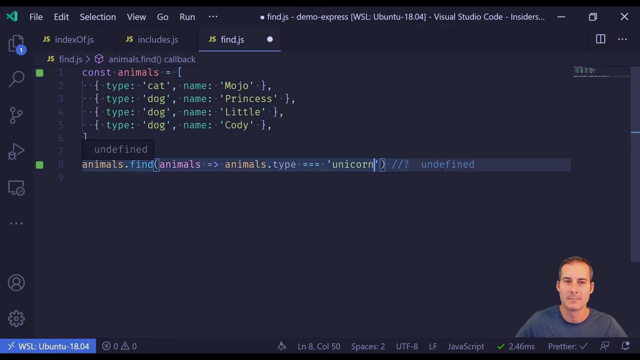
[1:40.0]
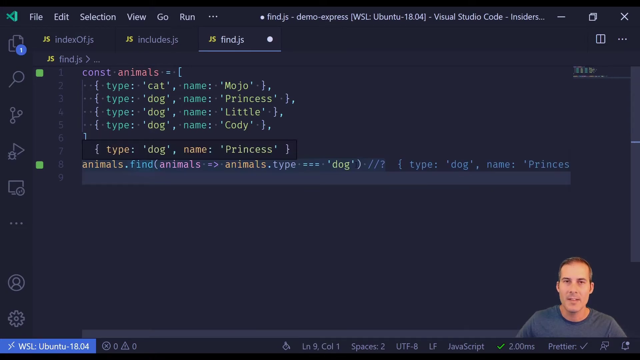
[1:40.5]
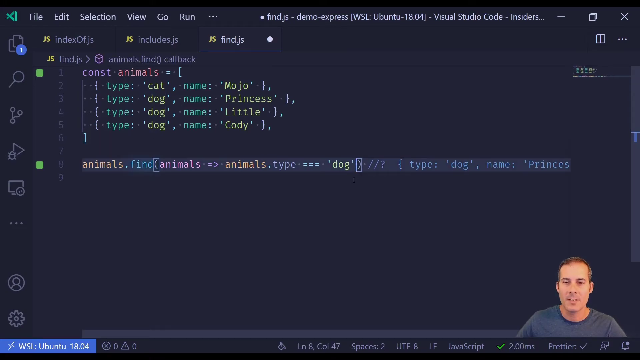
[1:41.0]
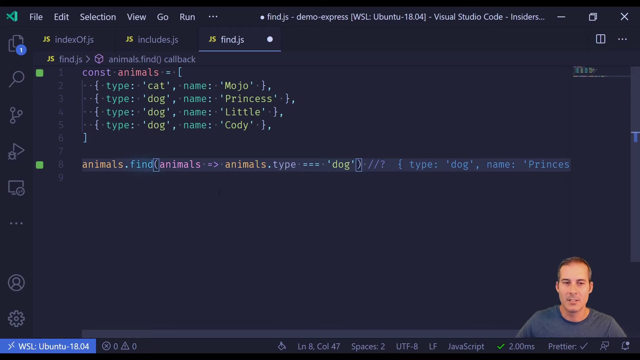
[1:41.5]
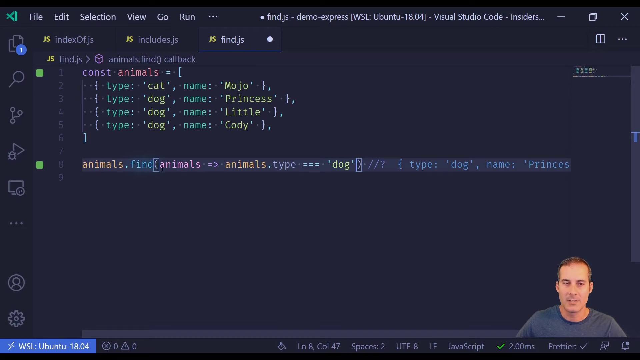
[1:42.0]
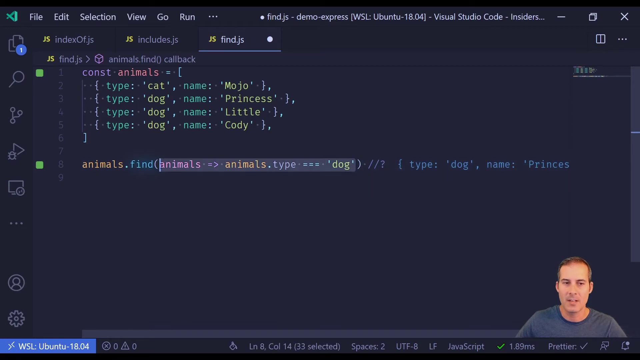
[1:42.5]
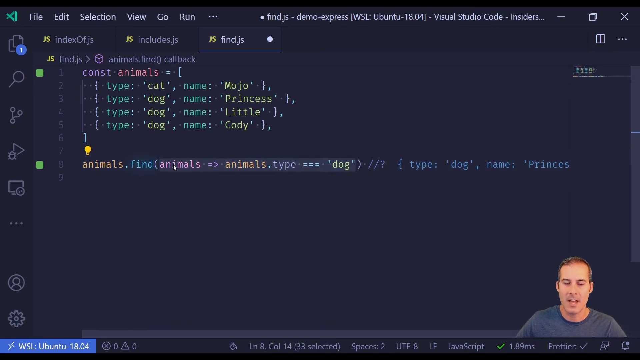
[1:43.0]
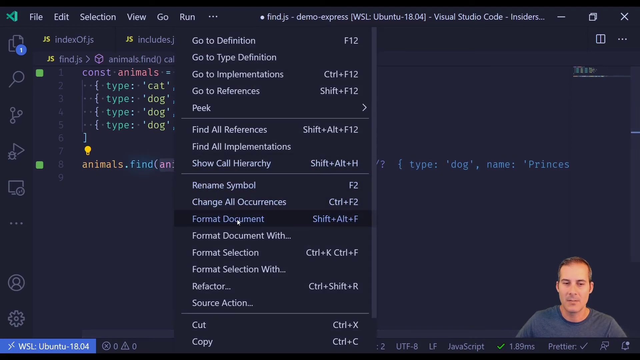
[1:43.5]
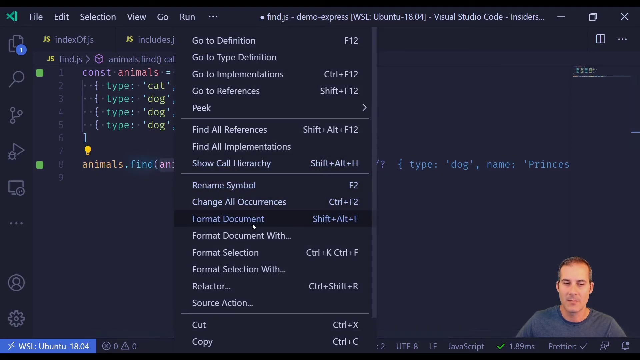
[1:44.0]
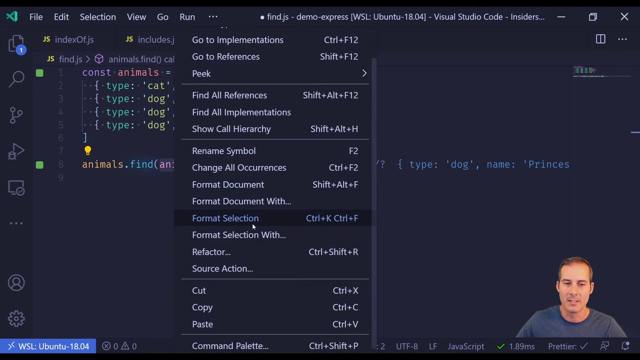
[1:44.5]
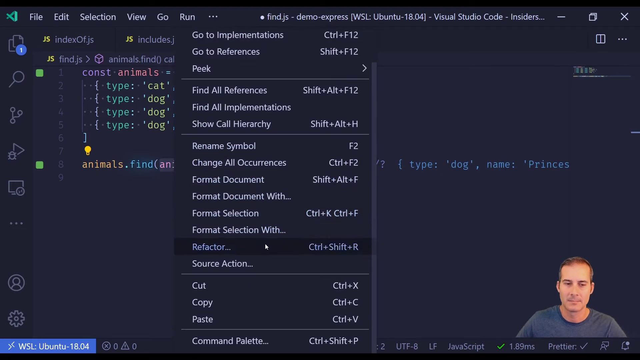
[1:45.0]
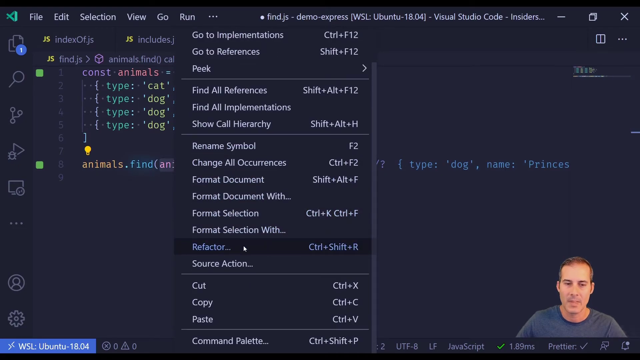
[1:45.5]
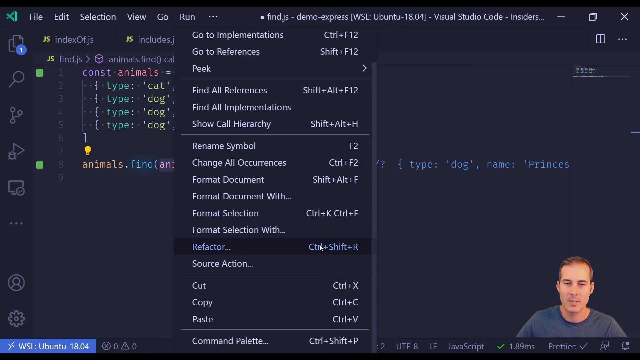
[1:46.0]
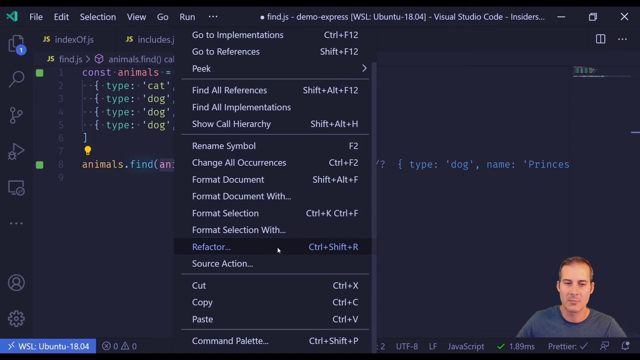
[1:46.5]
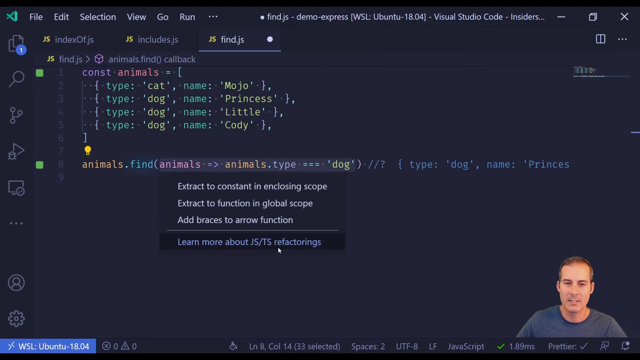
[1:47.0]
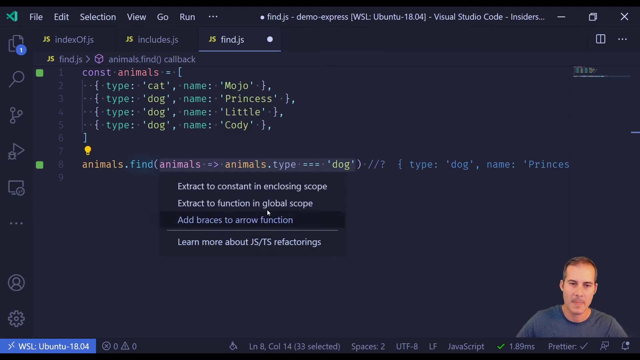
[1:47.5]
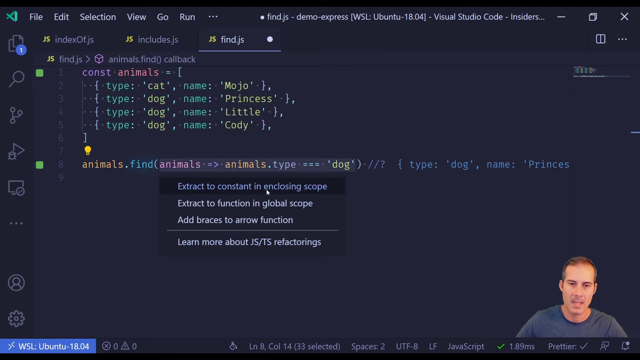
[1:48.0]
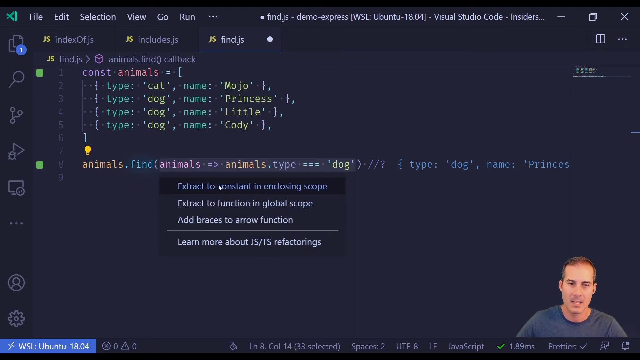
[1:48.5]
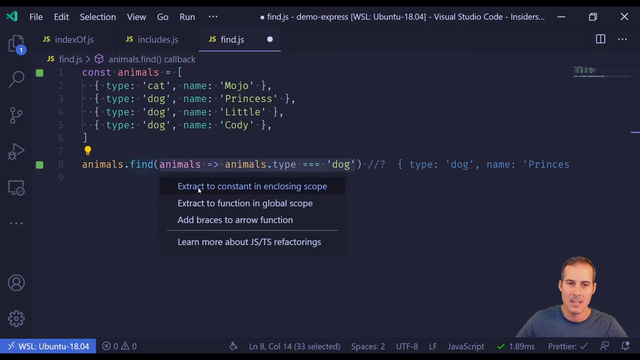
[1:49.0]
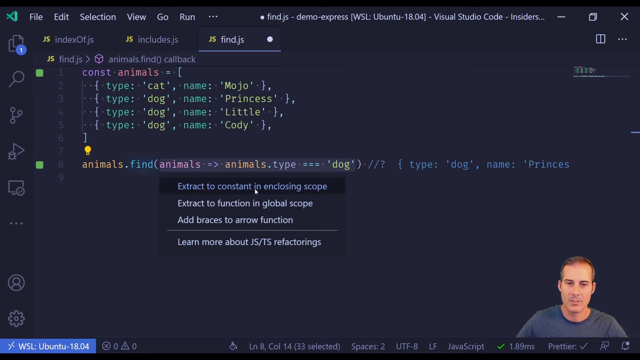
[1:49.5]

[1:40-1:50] Some of the JavaScript Joel is working on is on the screen, the code with the animals: a cat named Mojo, a dog named Princess, a dog named Little, and a dog named Cody, plus animals type unicorn. Joel is in the bottom right corner. He pulls up a drop-down menu and clicks "extract to constant and enclosing scope", then formats and refactors. Unicorn is put in under animals.